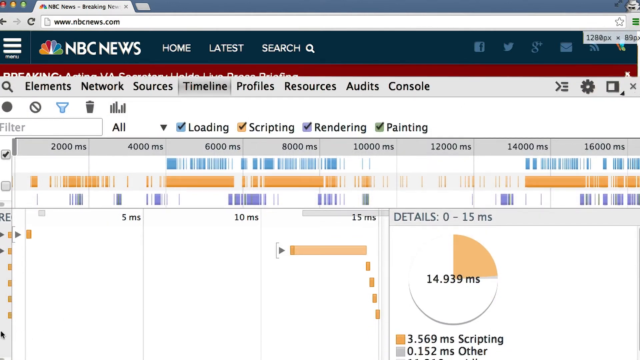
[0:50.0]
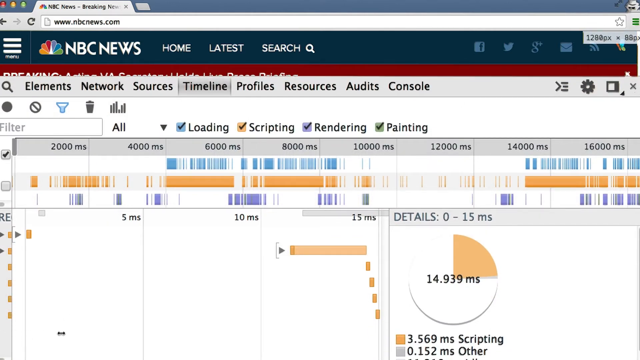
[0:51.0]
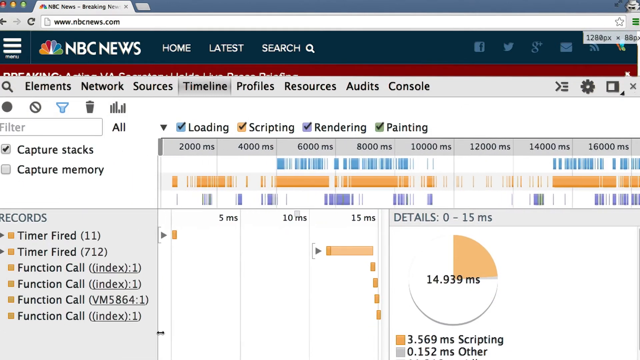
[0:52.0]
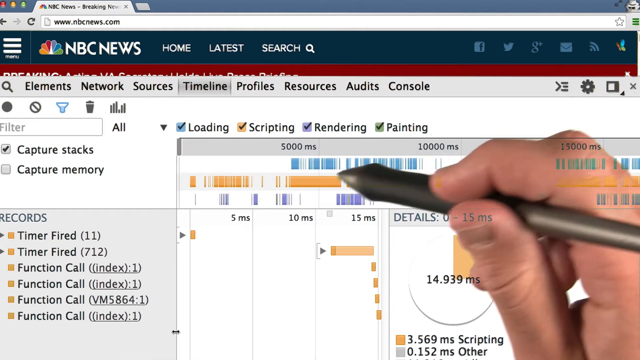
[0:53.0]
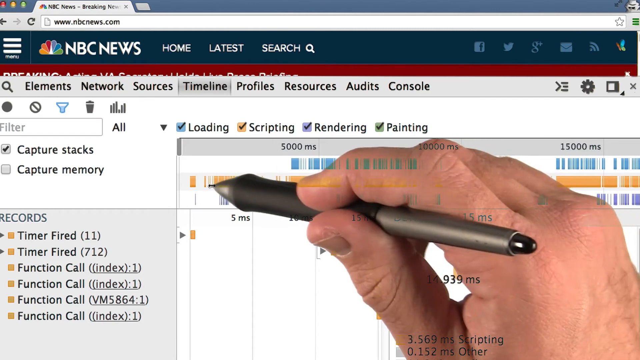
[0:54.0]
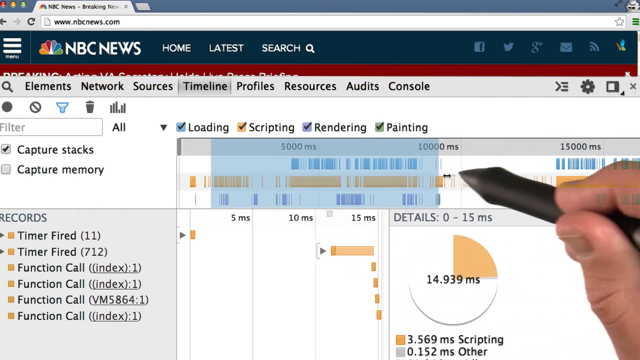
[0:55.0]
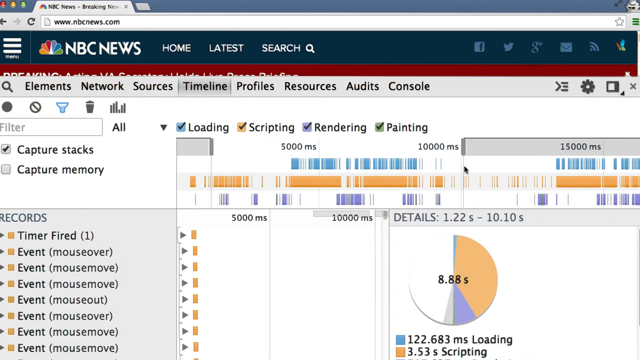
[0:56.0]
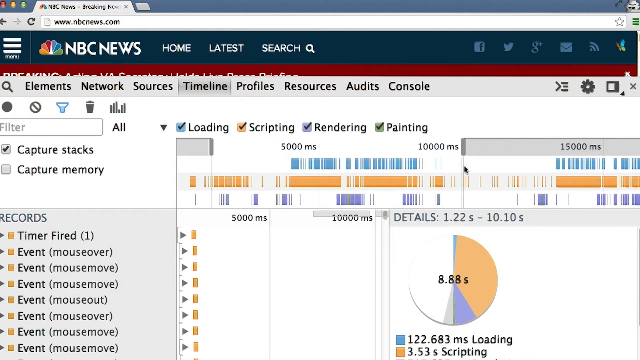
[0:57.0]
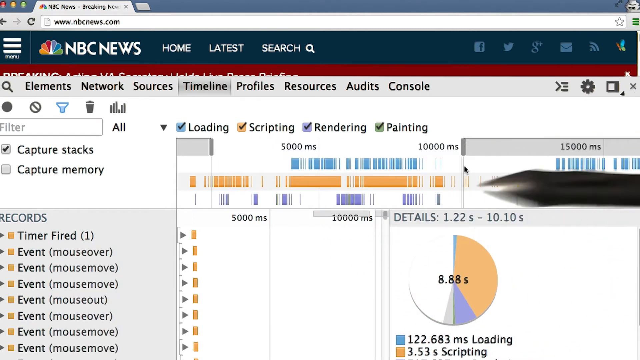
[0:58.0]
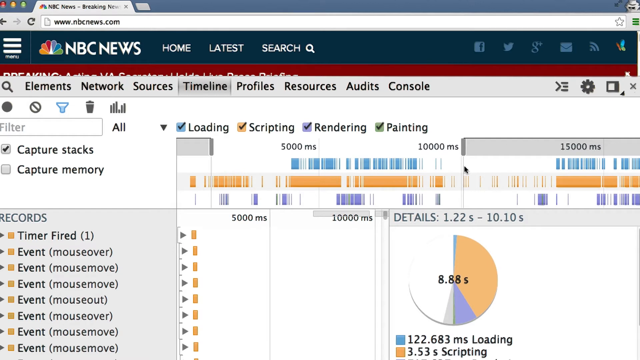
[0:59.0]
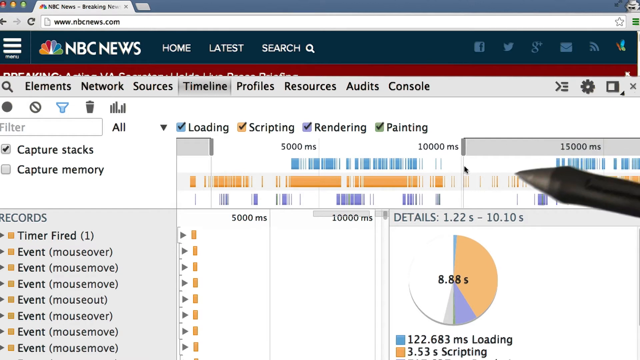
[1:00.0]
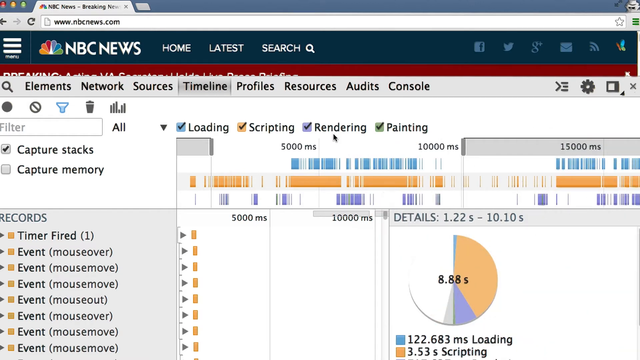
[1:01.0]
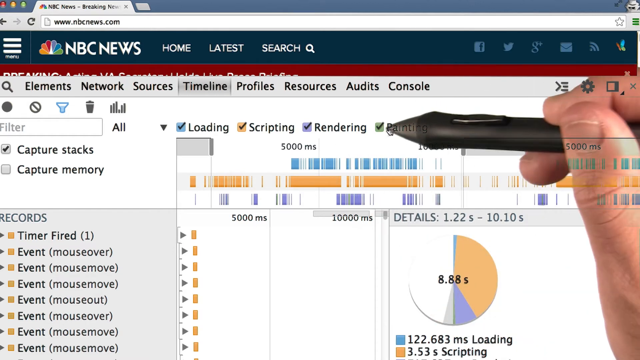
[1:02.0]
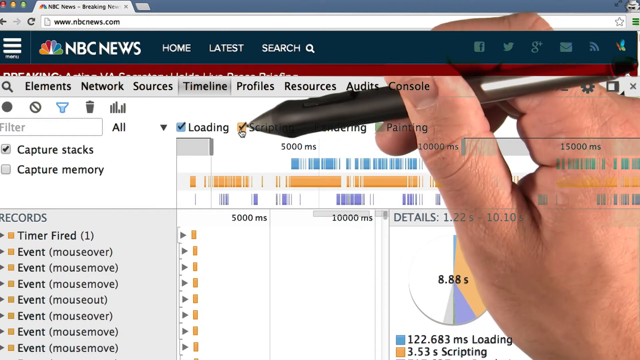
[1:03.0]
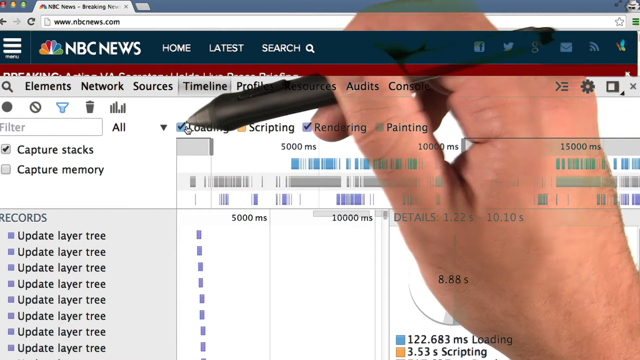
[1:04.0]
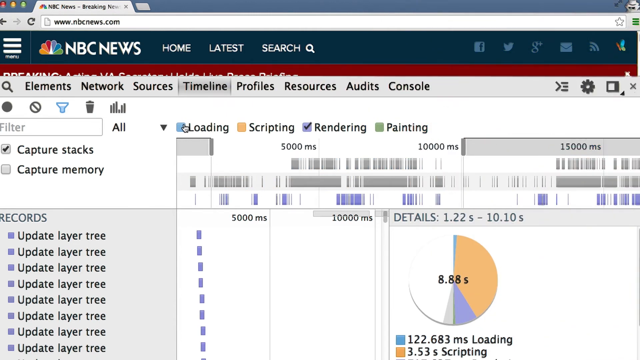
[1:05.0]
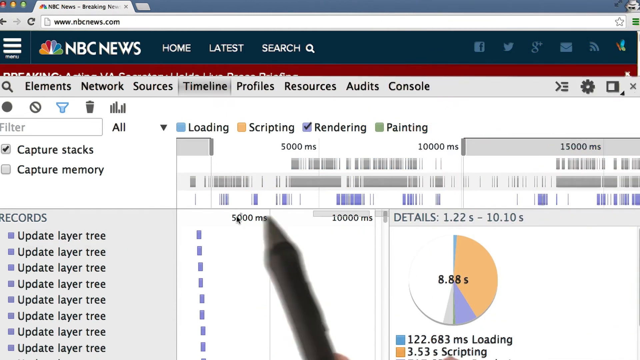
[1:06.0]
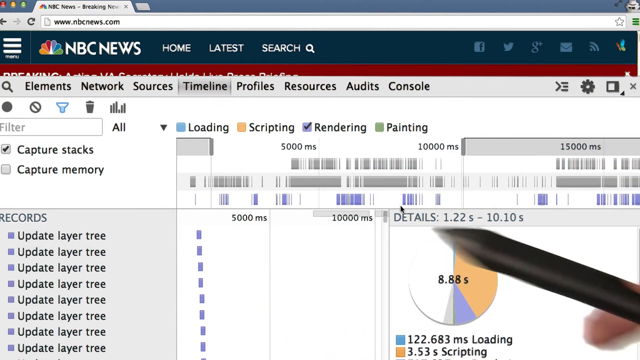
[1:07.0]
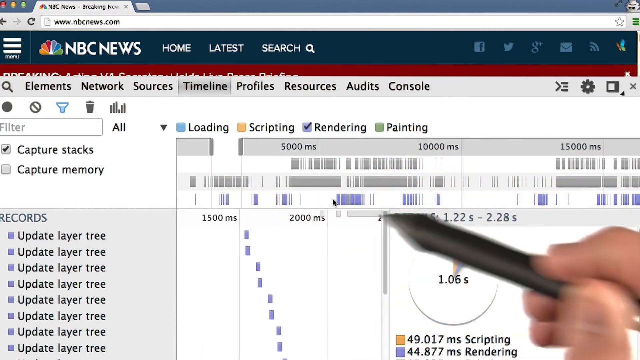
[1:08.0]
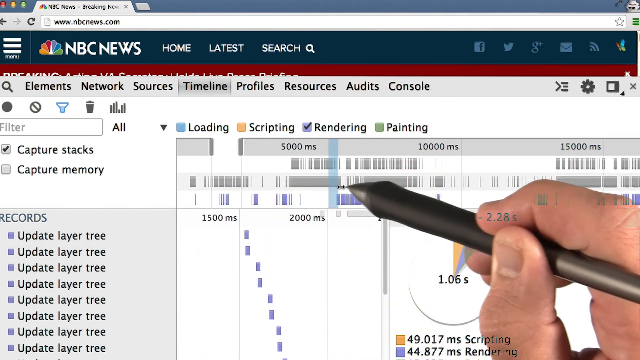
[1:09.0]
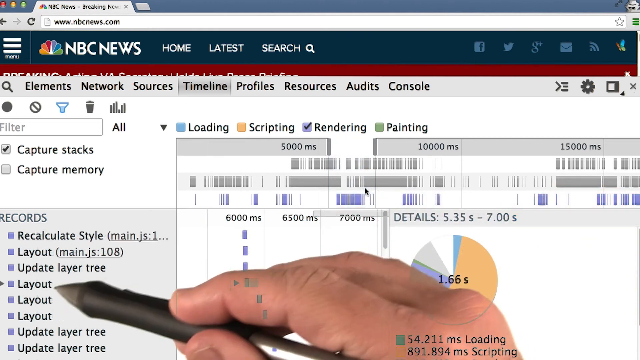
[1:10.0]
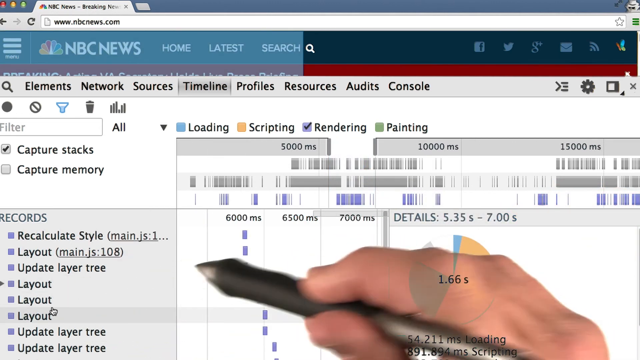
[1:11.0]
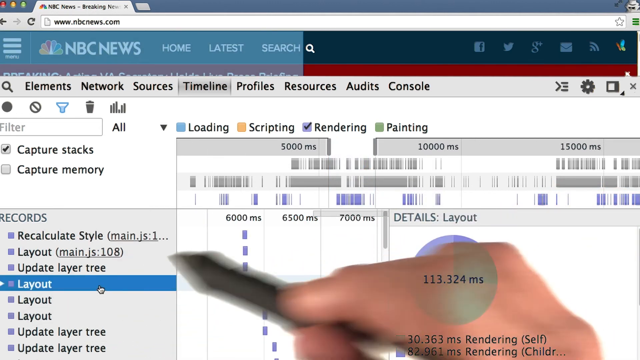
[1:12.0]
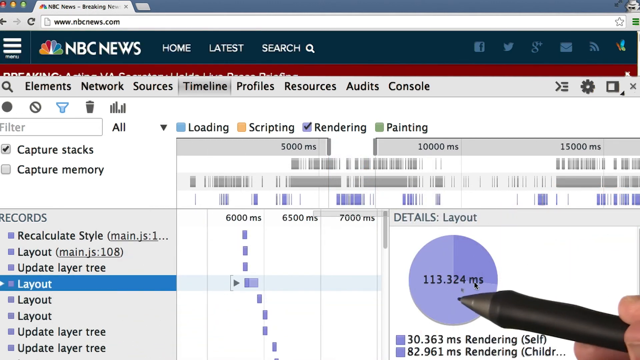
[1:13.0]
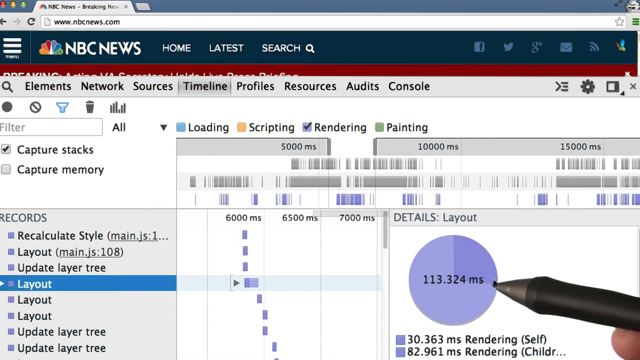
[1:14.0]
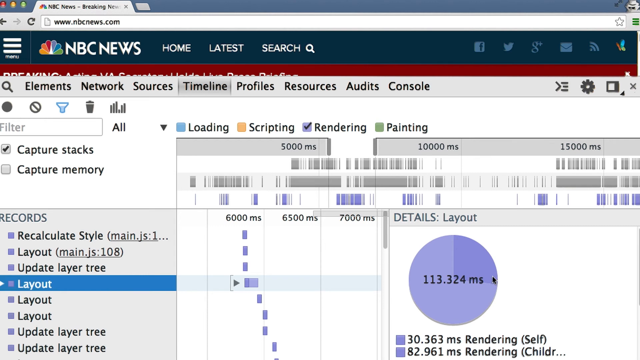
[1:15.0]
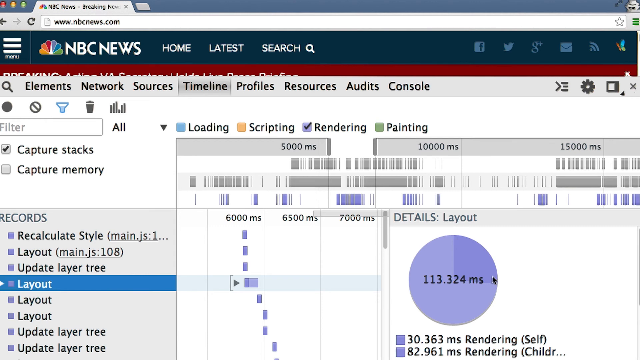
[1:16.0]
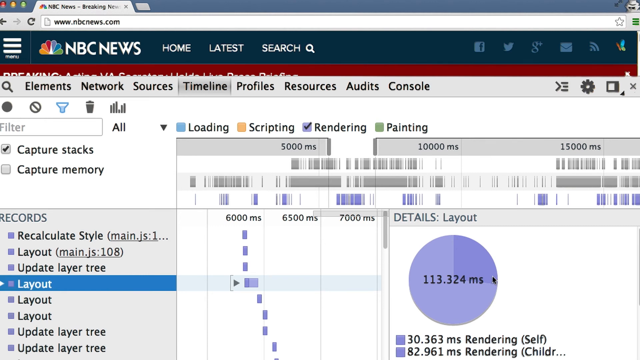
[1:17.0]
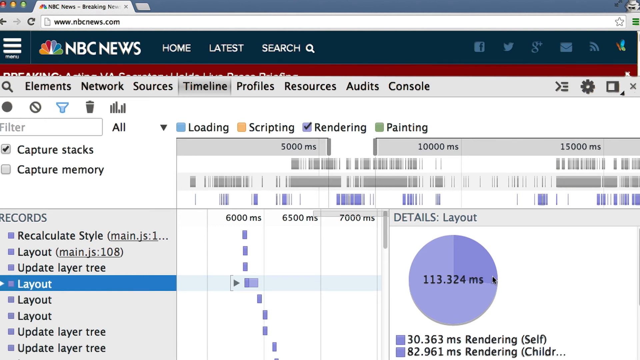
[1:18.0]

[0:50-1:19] The Timeline tab is clicked, with the timeline content below it, and the mouse drags the timeline itself to the right. The left column shows records such as "Timer Fired," "Timer Fired," and "Function Call." The mouse highlights a portion above the timeline and points to it several times, and dots are put on the screen. Loading, Scripting, and Painting are unselected so only Rendering is left, and the records show only "Update Layer Tree." The view is highlighted again and layout is checked, so "Select Layout" is selected with a blue background, set apart from the rest. The pointer then indicates a chart in the Details Layout with a pie-graph kind of look. The screen is dragged further, and the pie graph changes color so that only a quarter of it is colored yellow.